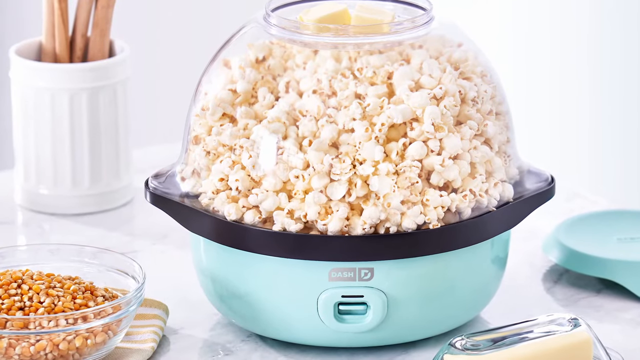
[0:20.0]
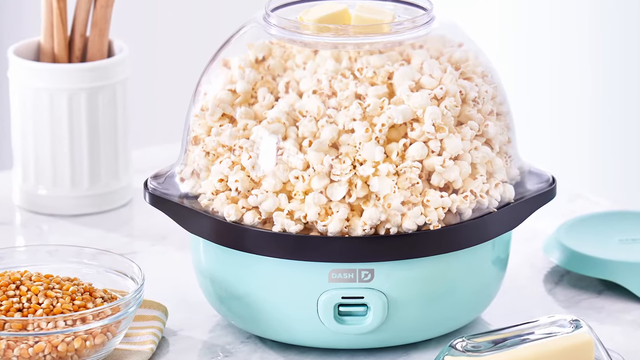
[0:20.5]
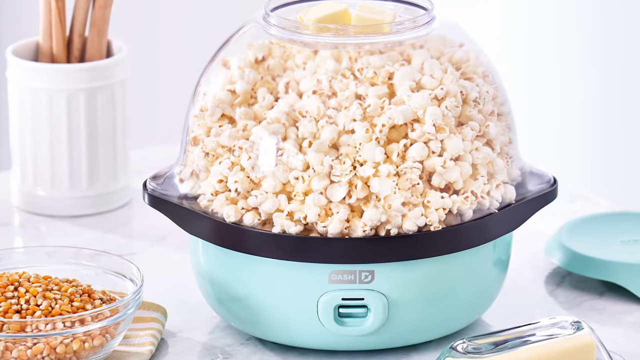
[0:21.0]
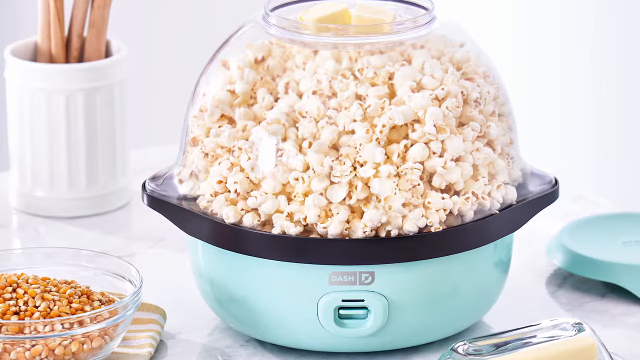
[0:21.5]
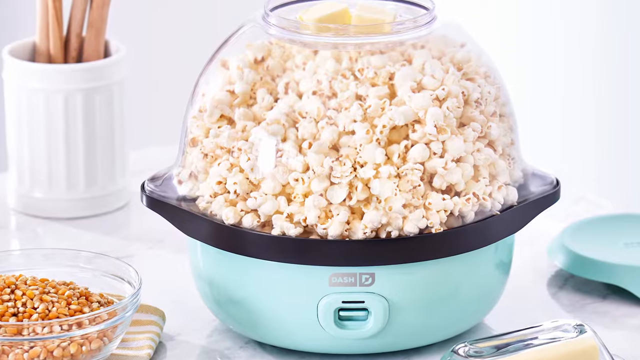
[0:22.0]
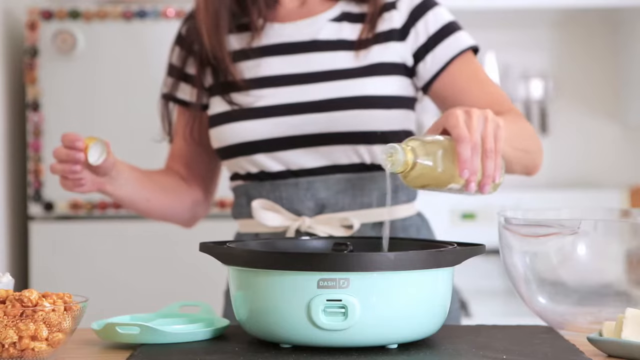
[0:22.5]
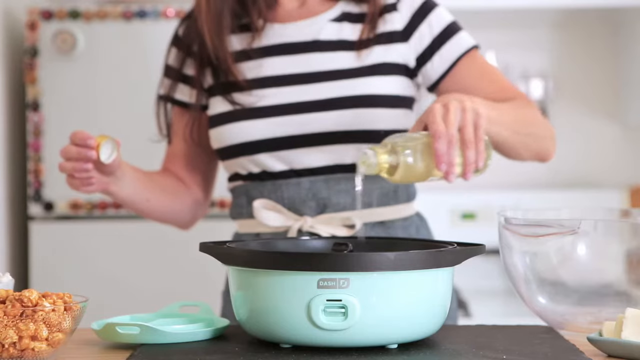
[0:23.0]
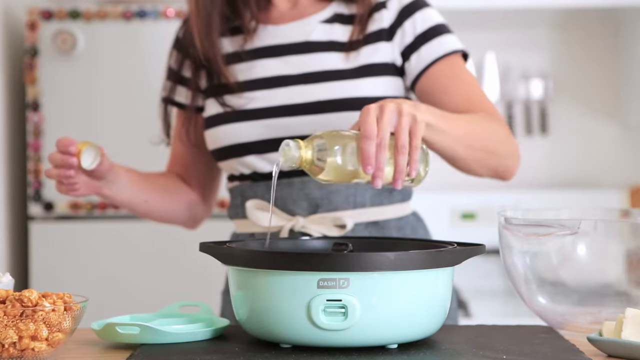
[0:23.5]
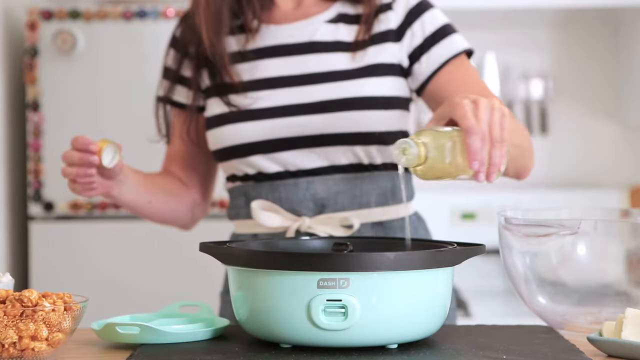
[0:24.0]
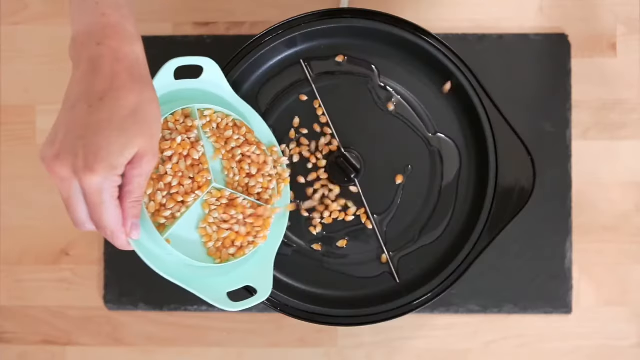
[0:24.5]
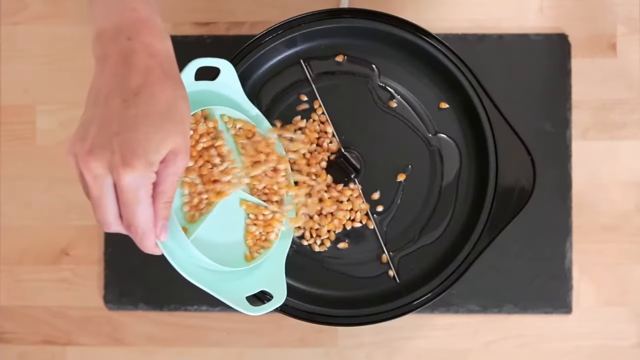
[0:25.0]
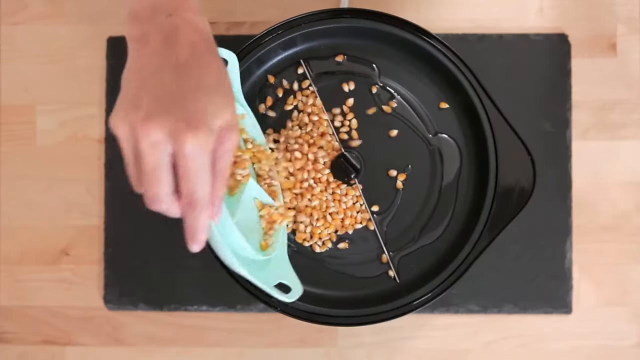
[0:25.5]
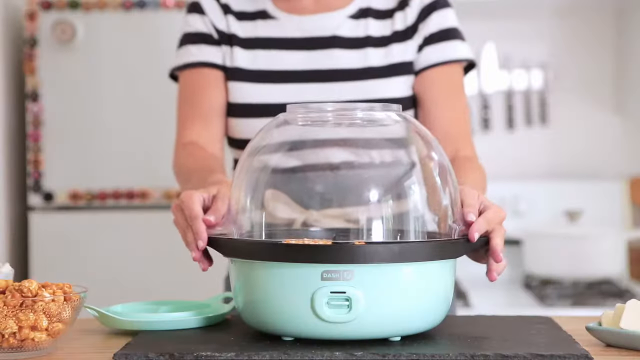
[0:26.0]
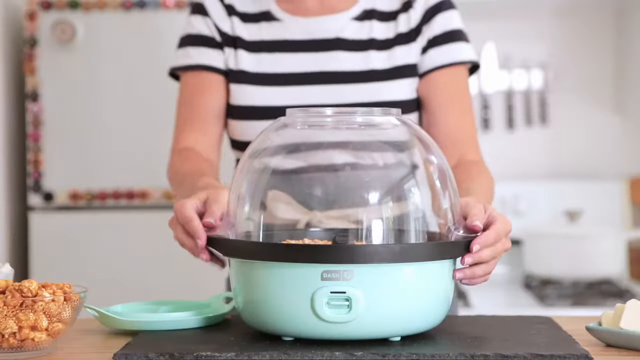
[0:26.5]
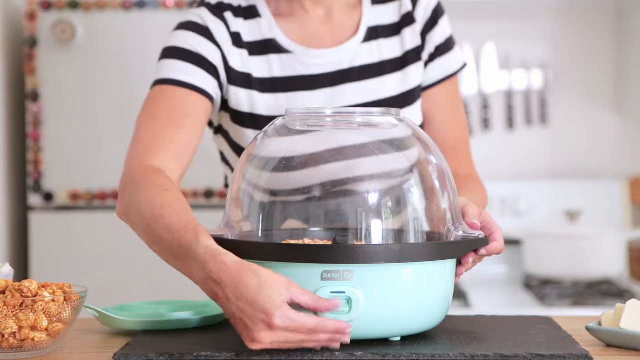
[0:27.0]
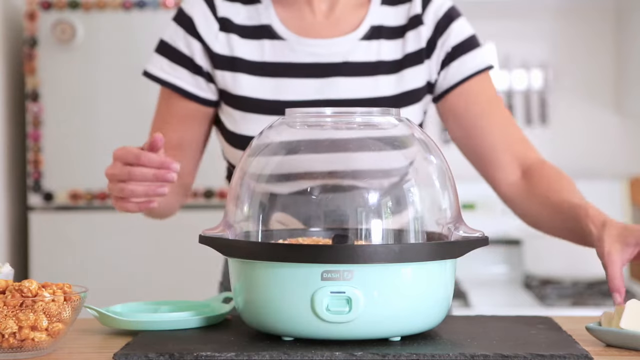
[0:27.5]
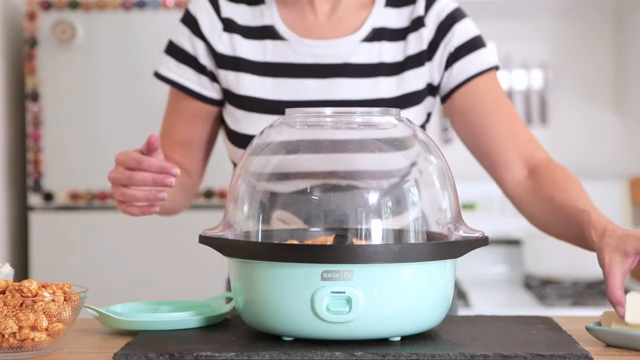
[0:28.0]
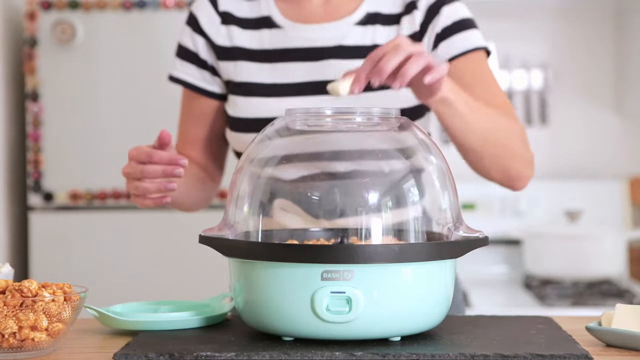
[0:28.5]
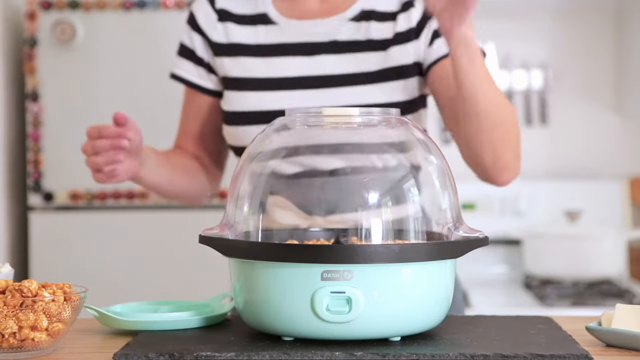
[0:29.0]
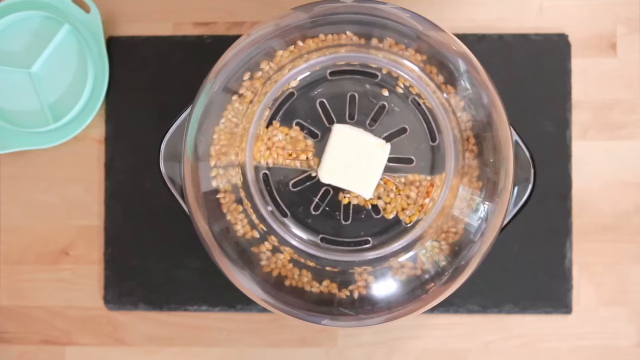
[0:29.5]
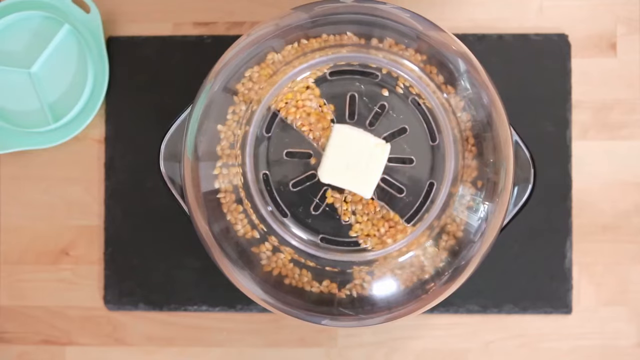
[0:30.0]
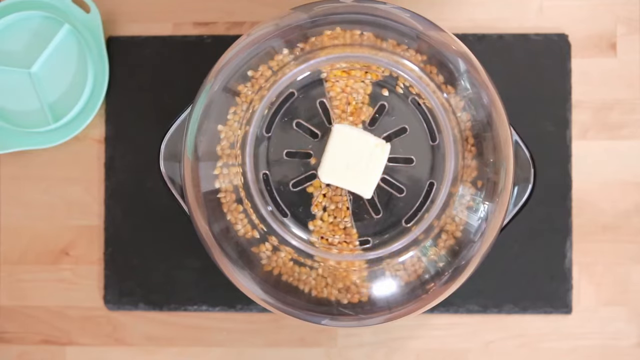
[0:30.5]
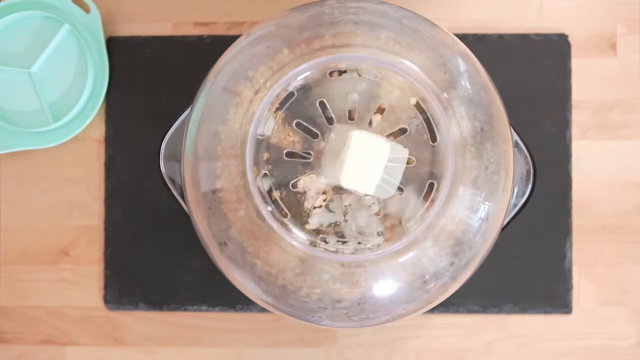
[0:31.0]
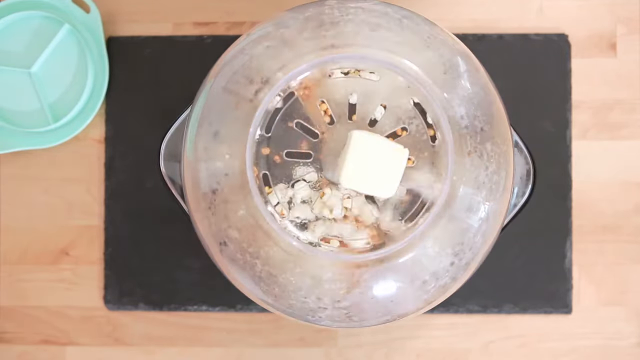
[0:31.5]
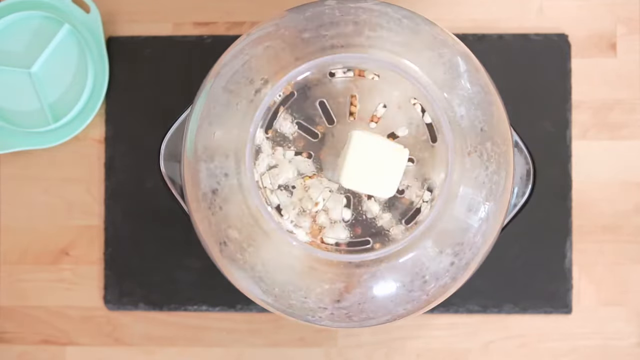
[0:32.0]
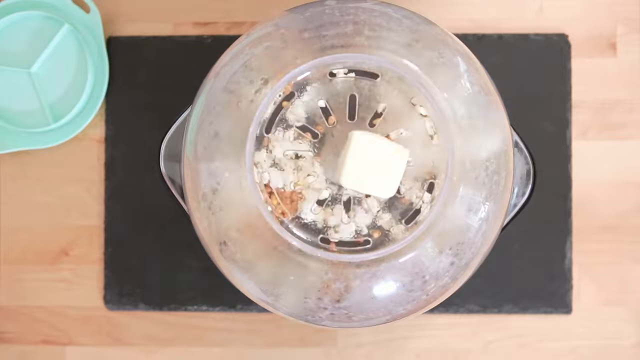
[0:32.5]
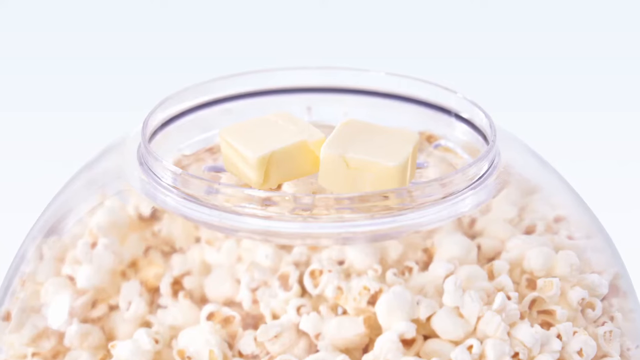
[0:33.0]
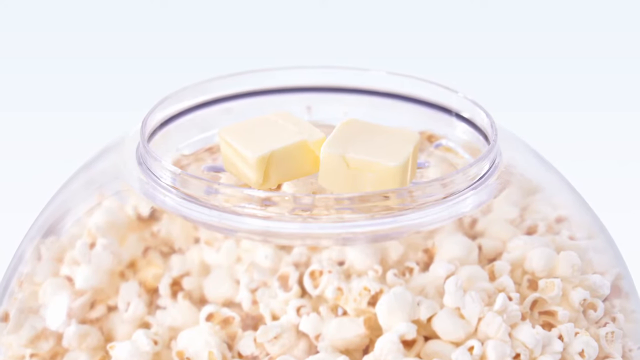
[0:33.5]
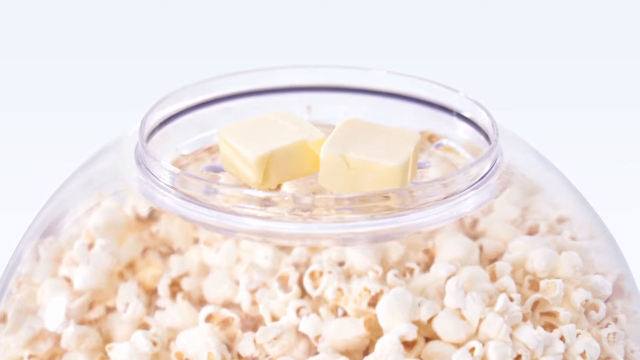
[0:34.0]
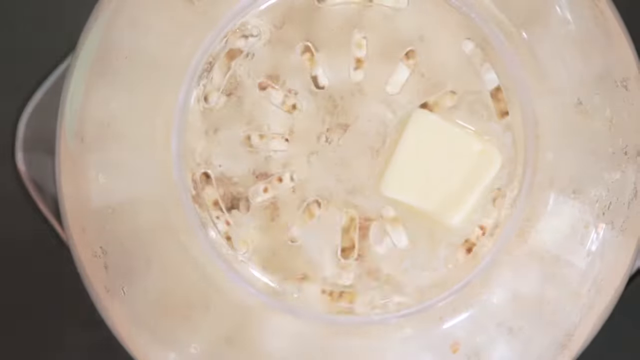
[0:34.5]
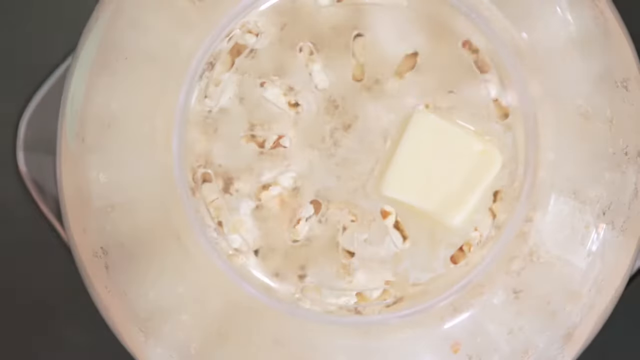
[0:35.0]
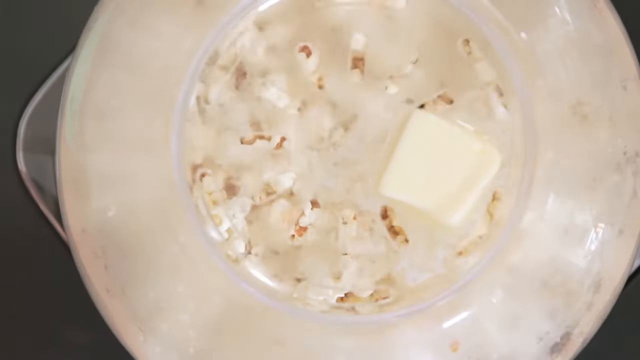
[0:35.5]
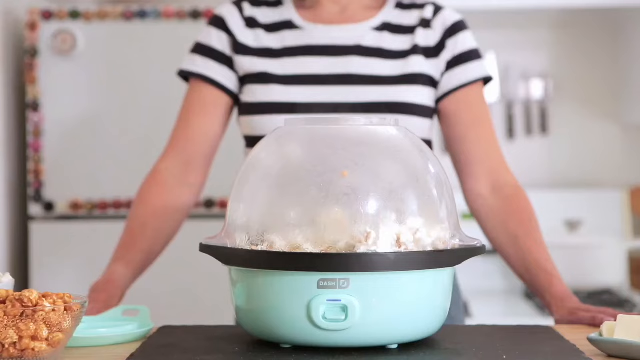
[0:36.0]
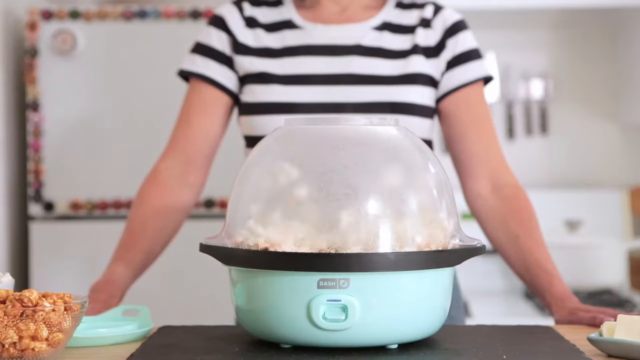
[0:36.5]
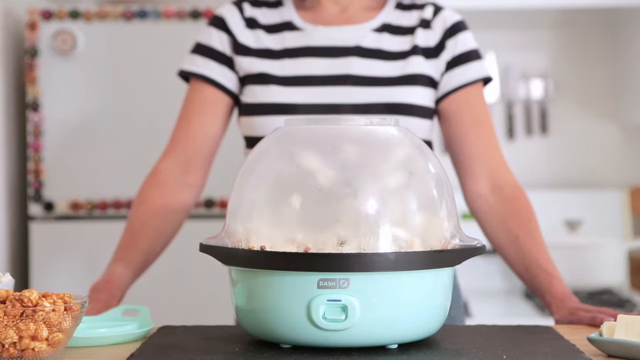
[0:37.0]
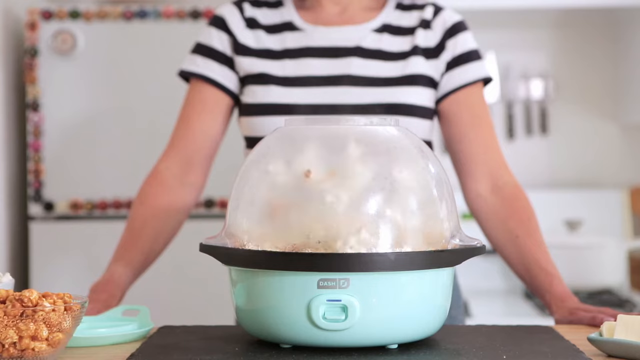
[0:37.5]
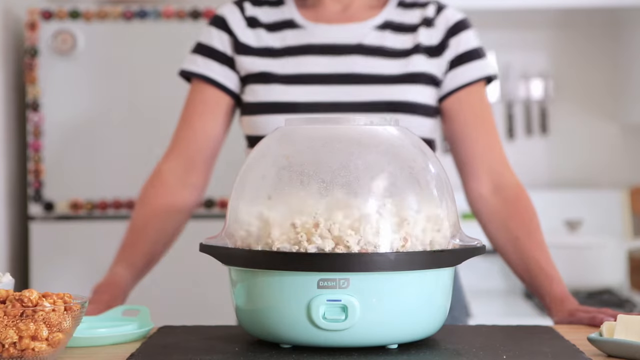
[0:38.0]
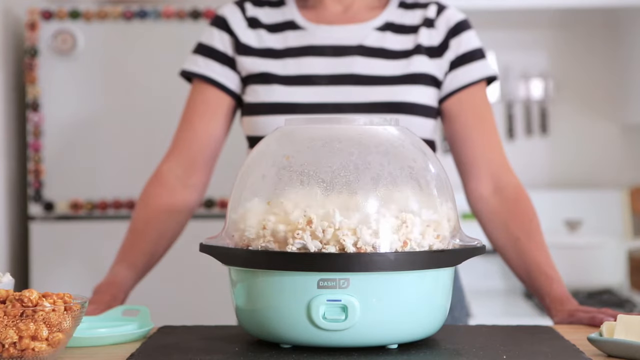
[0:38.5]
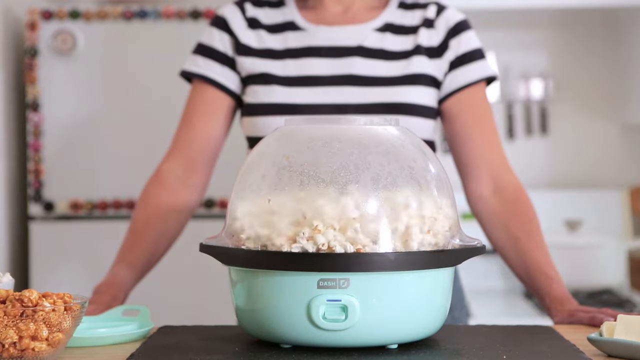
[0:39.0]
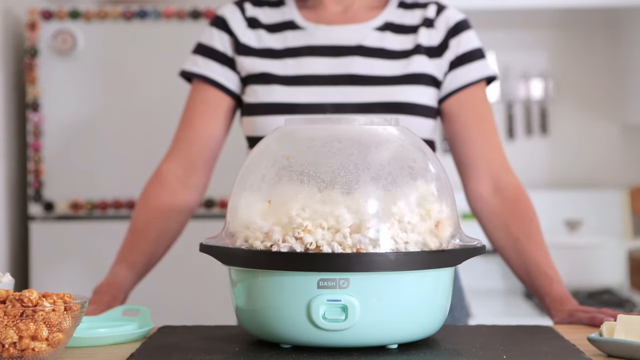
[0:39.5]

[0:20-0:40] The popcorn maker is shown, with a wooden cooking spoon in the background. The woman pours popcorn seeds into the machine and closes it with the lid, then pours some oil in and closes it again. She presses a button to start cooking, and she adds a little bit of butter to the machine. The popcorn starts popping bit by bit as the machine operates, while she waits and watches it.